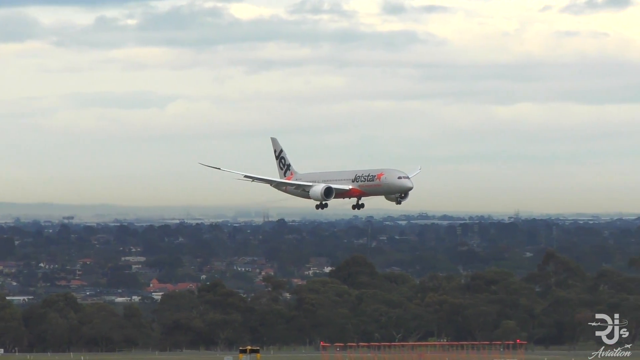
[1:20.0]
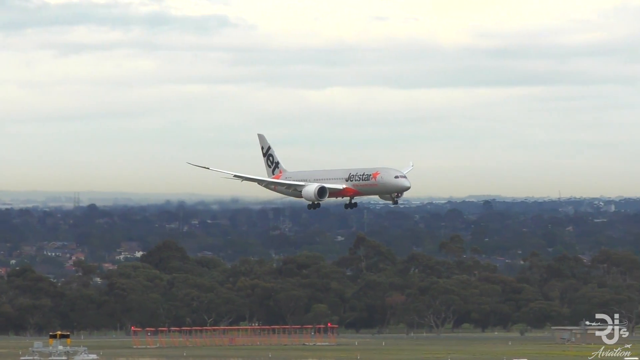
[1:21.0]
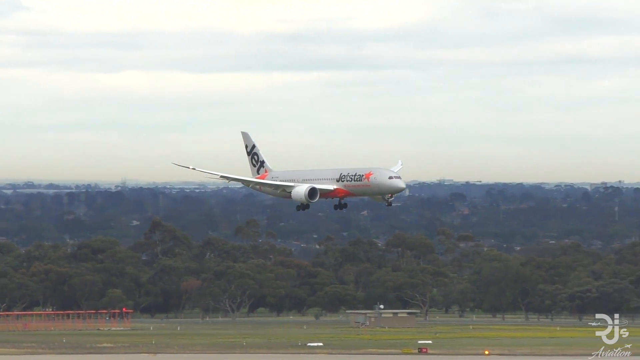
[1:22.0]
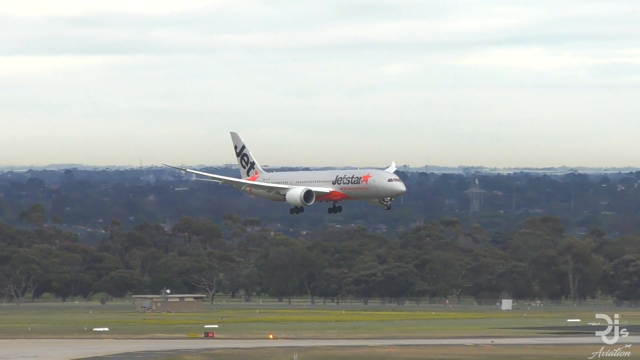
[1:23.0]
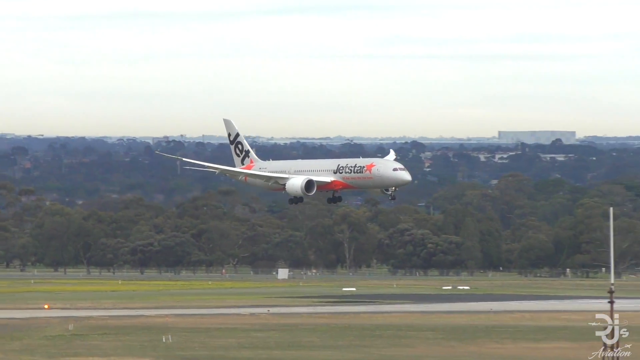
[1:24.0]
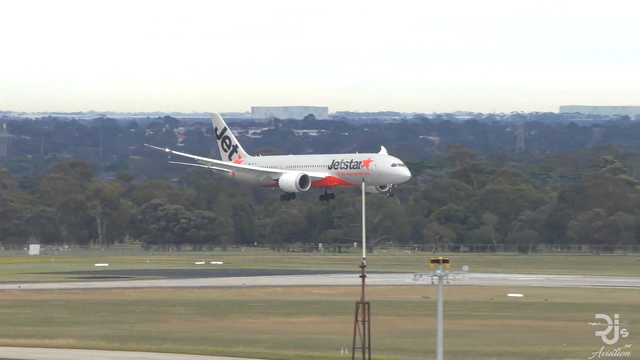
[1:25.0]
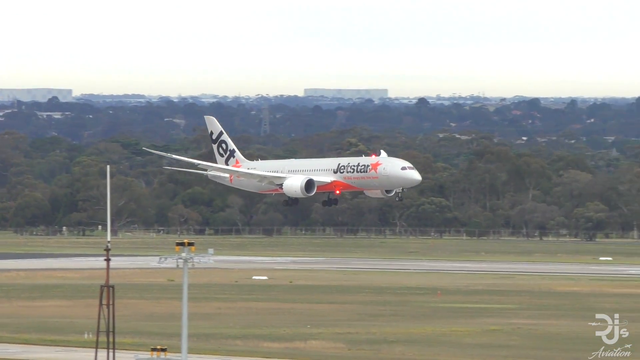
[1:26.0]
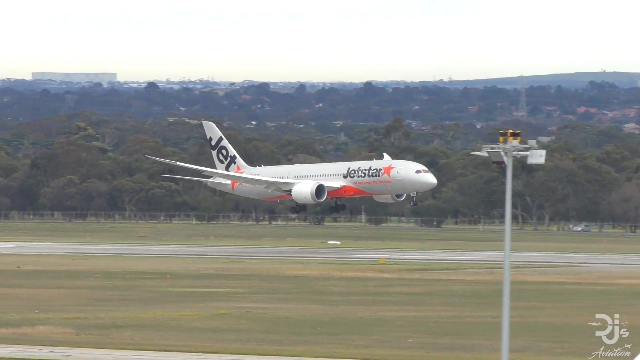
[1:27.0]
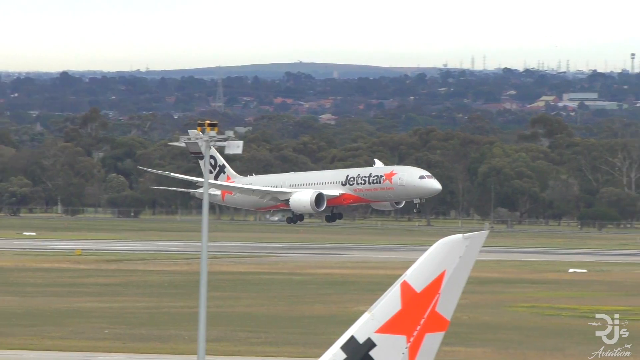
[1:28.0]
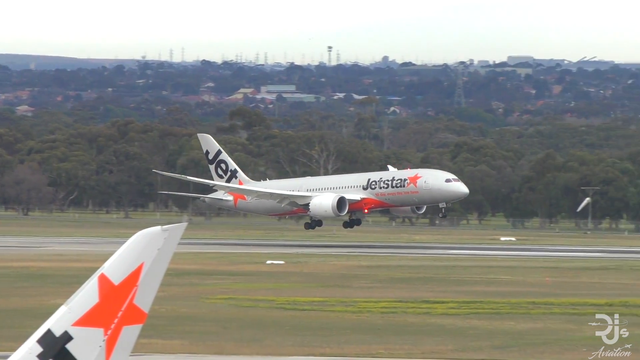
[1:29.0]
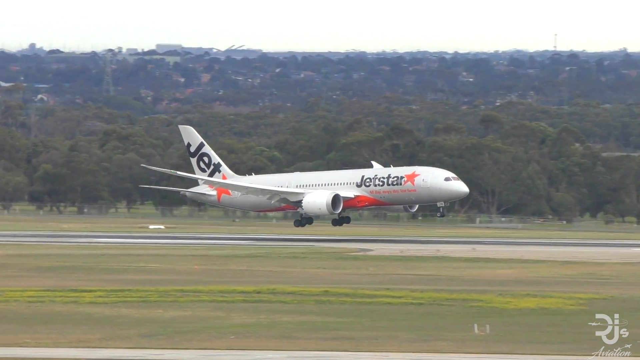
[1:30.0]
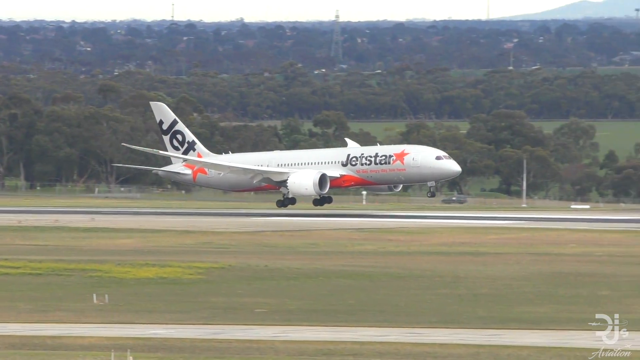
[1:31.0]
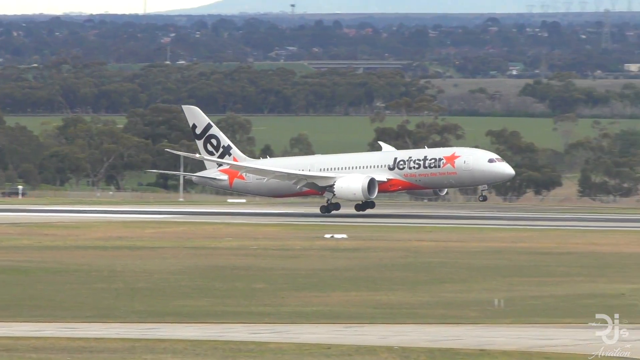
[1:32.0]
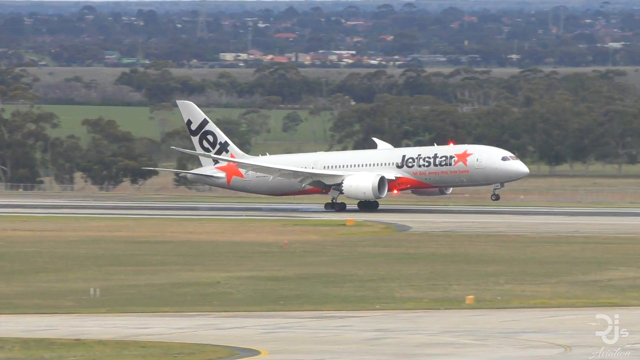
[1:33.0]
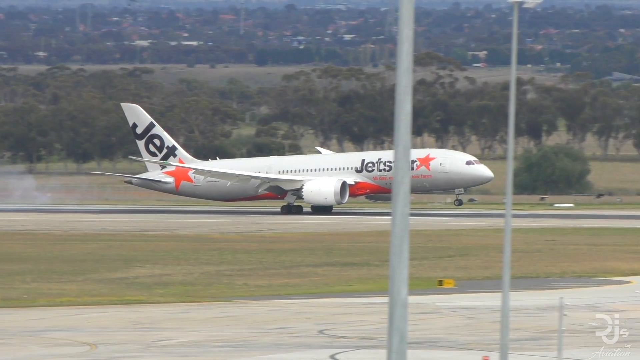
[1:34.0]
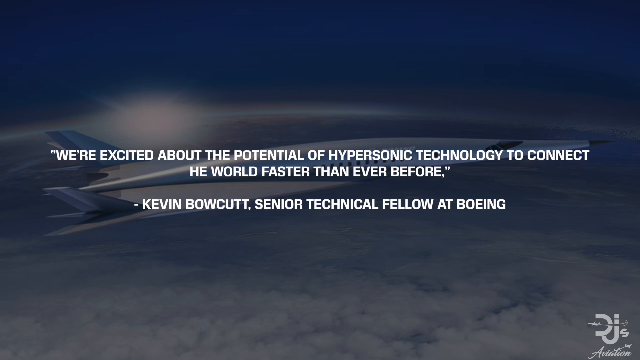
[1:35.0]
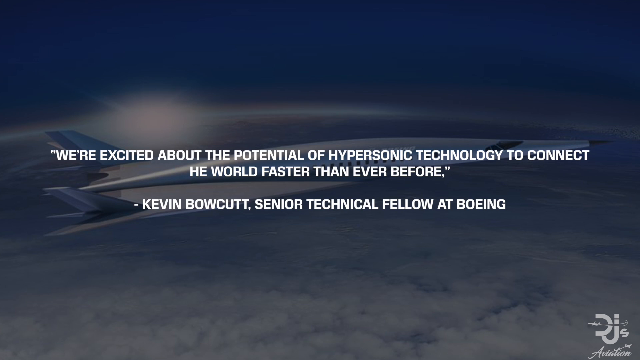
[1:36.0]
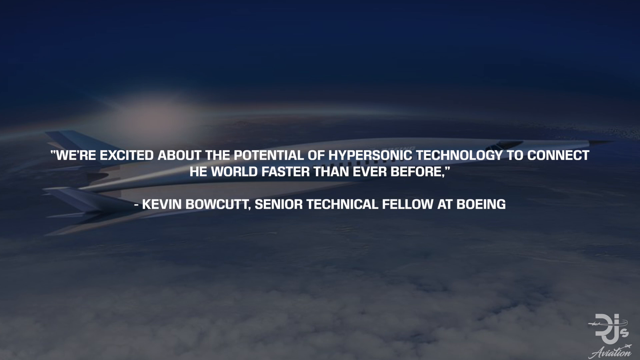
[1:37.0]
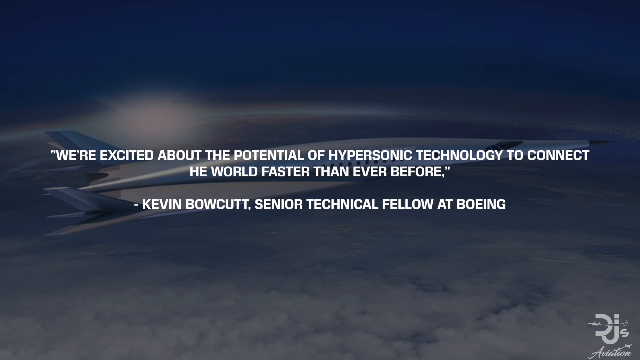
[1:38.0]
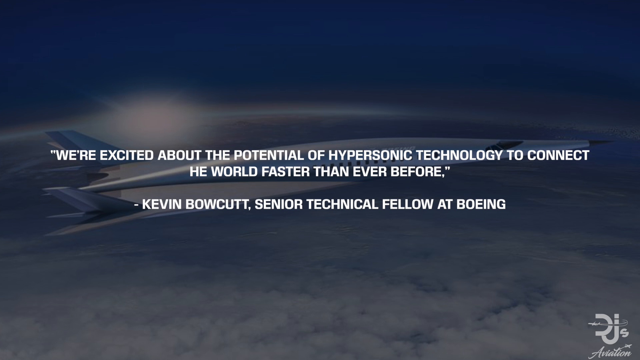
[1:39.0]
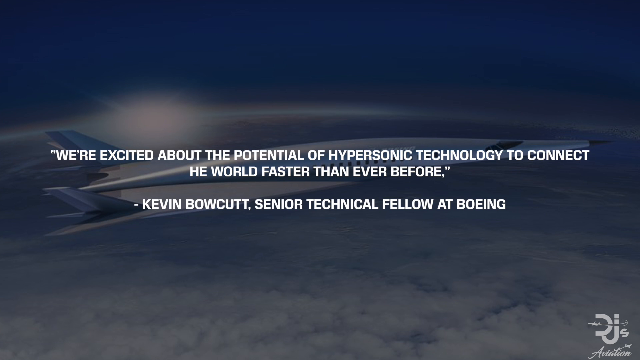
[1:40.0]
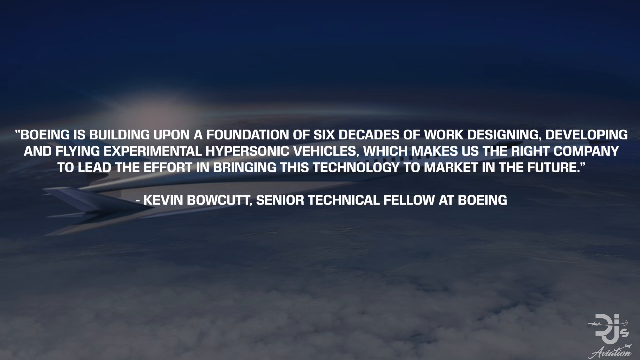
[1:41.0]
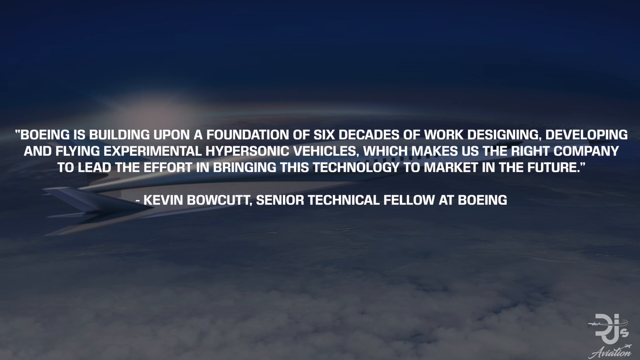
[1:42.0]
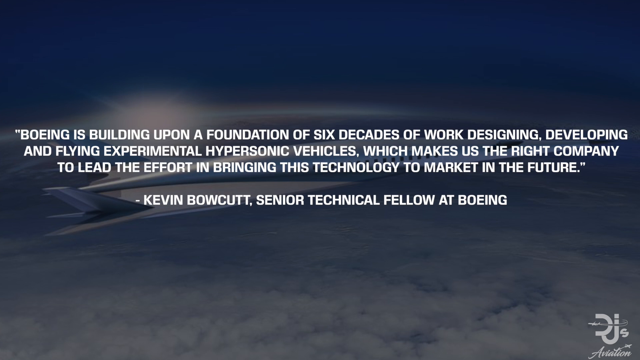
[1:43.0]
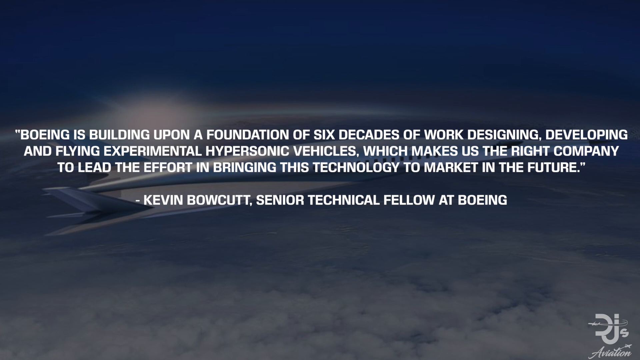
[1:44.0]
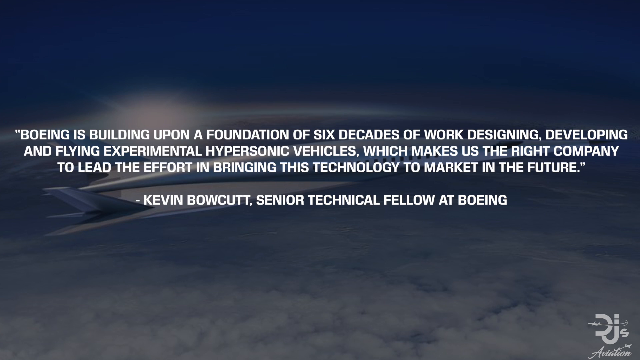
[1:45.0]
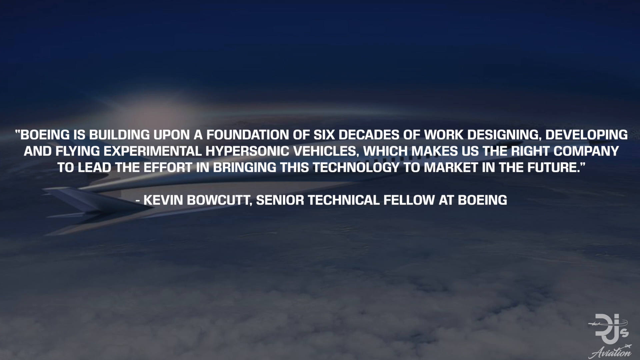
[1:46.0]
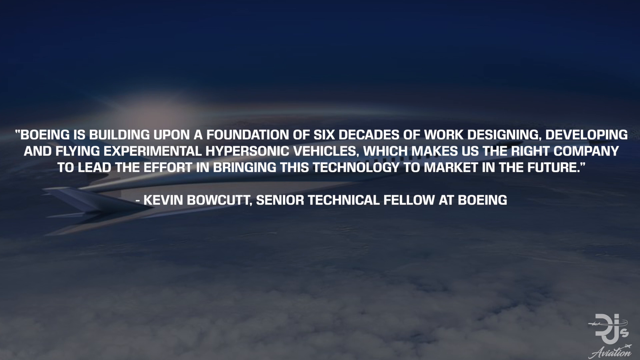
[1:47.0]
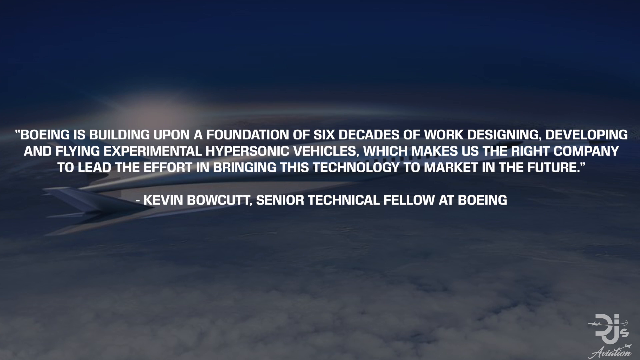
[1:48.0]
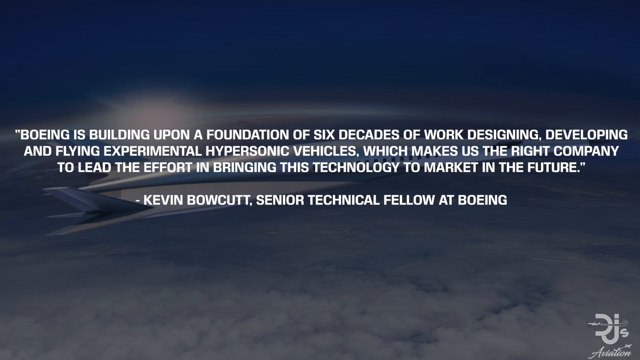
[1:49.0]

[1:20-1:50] Another airplane flies in and is about to touch down at an airport in the distance. Many trees surround the airport, with what looks like a city and populated areas beyond them. The plane is a large passenger jet that appears to be a Jetstar aircraft: a logo on its side reads "Jetstar" with a picture of a star, and the tail says "Jet" in very big letters with the star image. The star in both logos is orange. A blinking red light on the bottom of the plane is visible as it touches down on the runway. Then what looks like a quote appears: "We're excited about the potential of hypersonic technology to connect the world faster than ever before," attributed to Kevin Bowcutt, Senior Technical Fellow at Boeing.